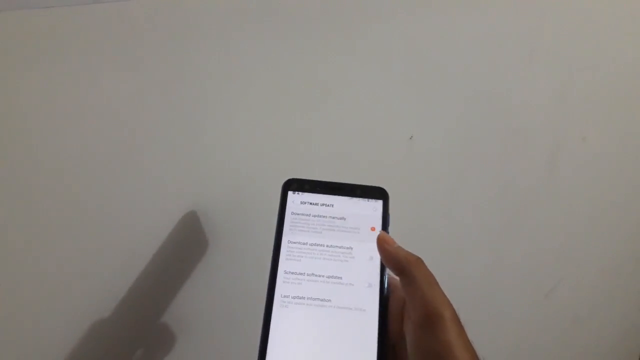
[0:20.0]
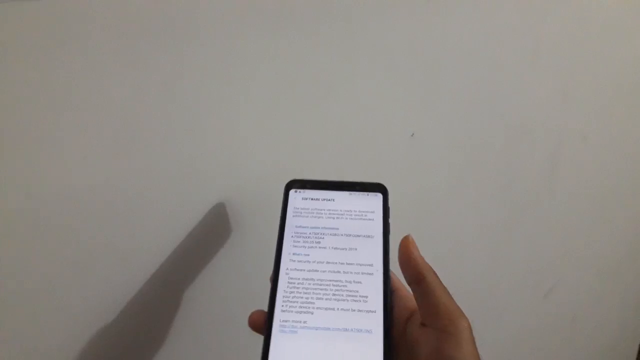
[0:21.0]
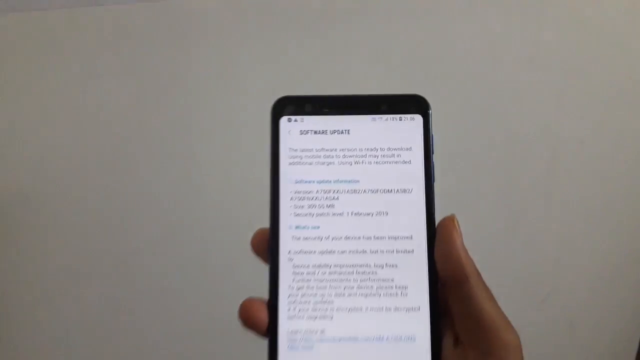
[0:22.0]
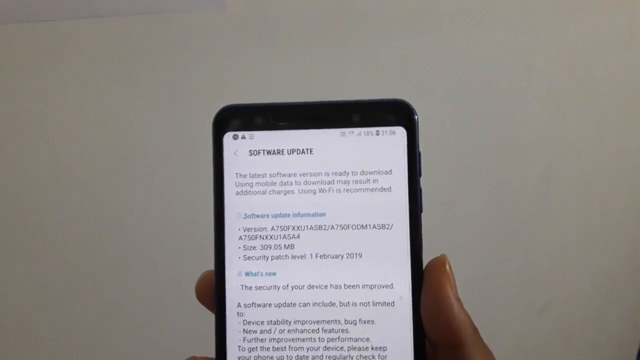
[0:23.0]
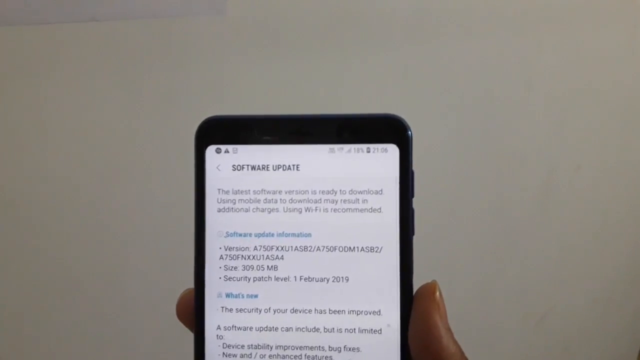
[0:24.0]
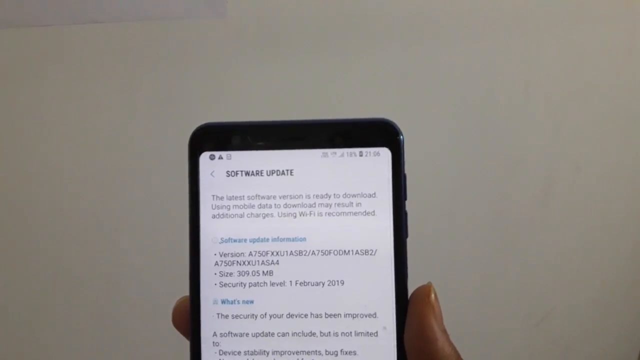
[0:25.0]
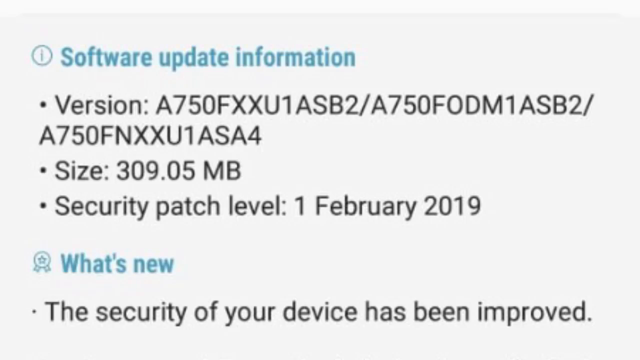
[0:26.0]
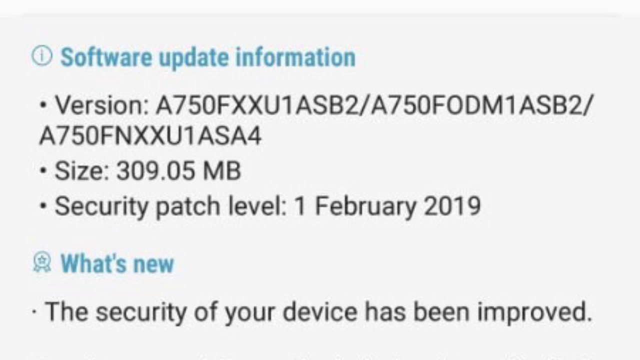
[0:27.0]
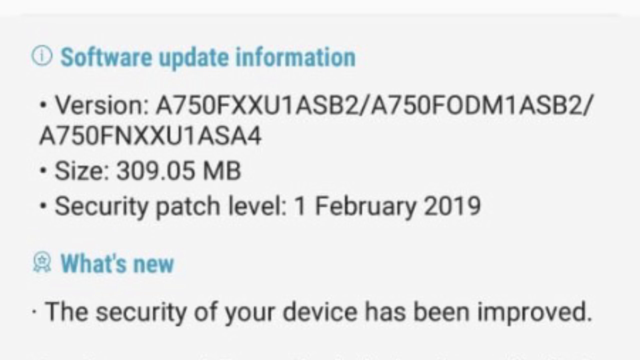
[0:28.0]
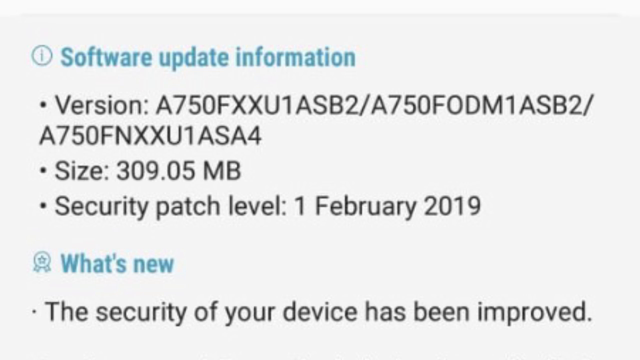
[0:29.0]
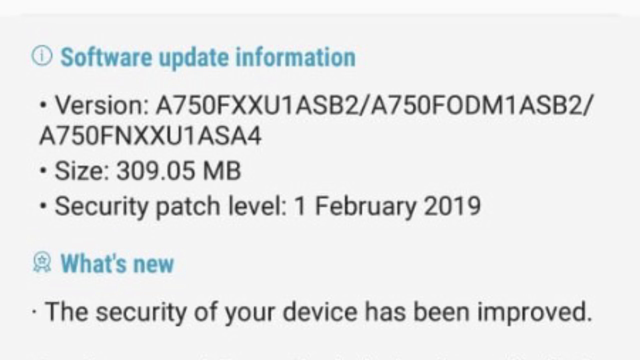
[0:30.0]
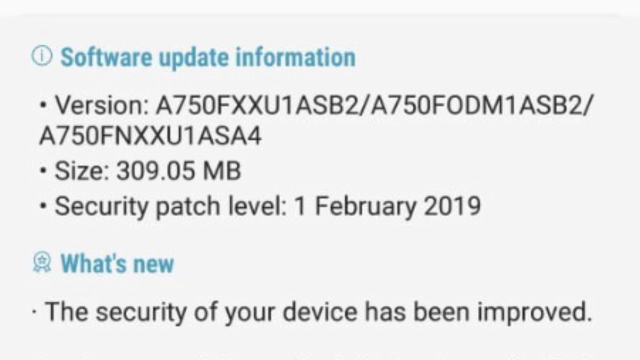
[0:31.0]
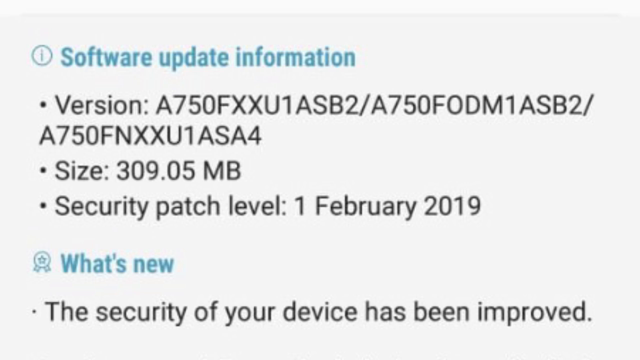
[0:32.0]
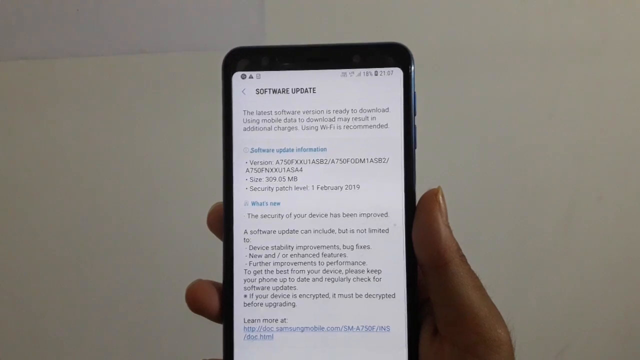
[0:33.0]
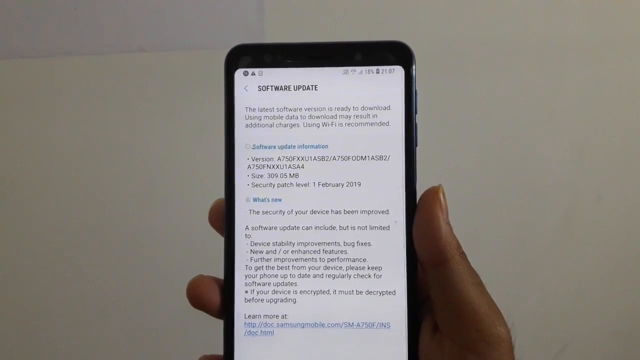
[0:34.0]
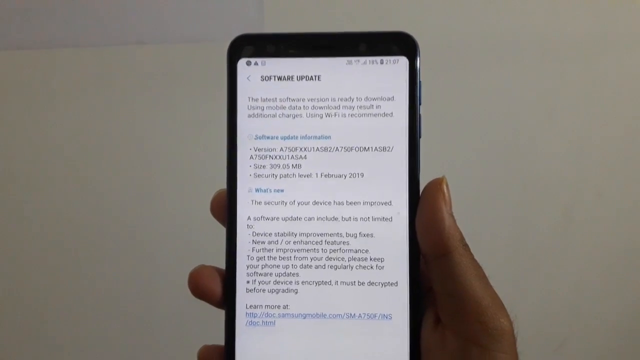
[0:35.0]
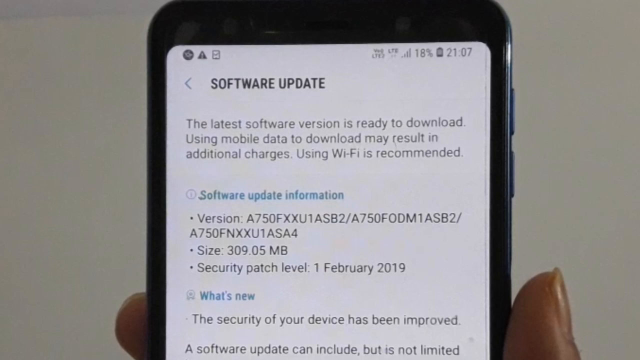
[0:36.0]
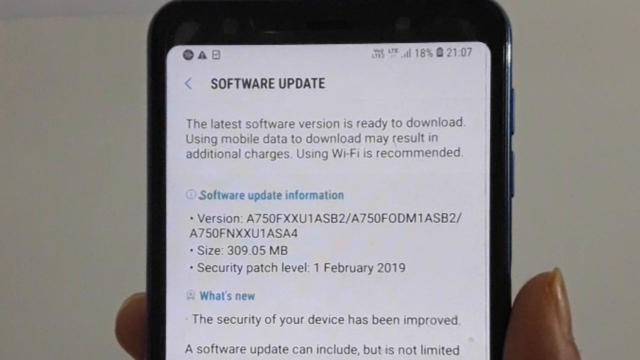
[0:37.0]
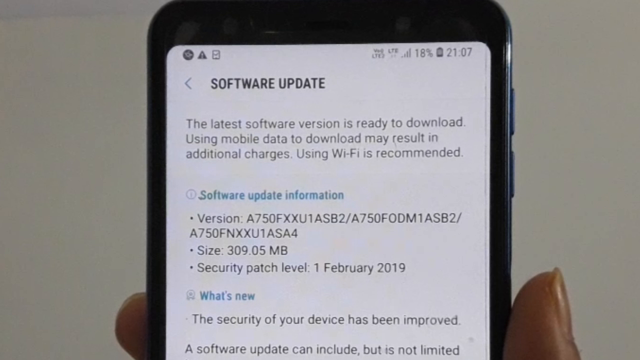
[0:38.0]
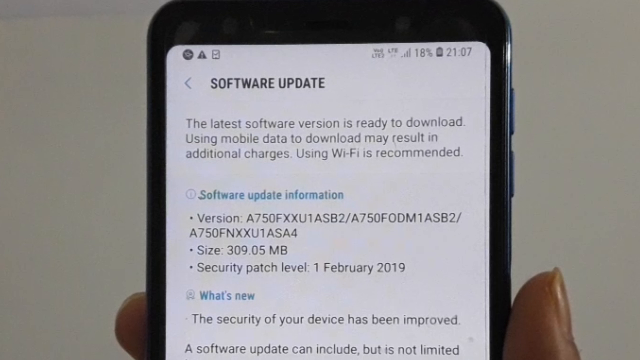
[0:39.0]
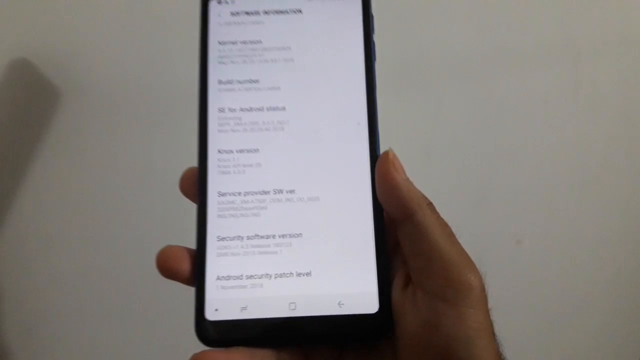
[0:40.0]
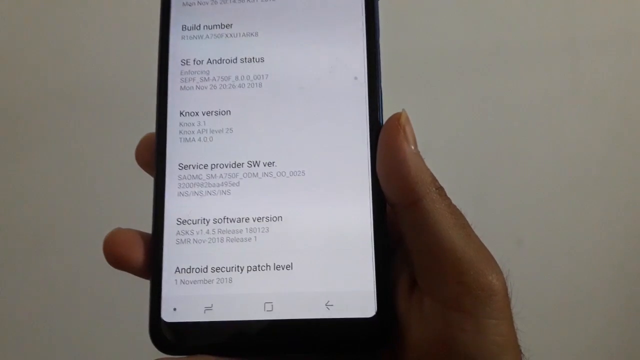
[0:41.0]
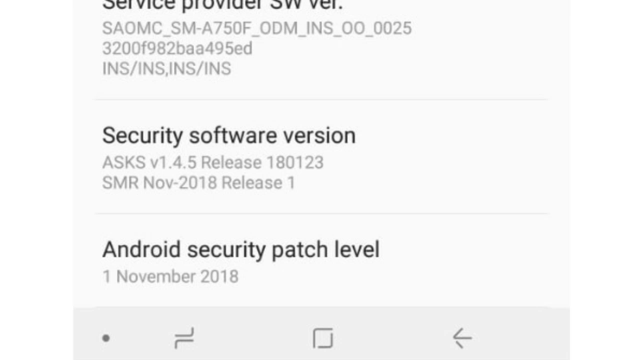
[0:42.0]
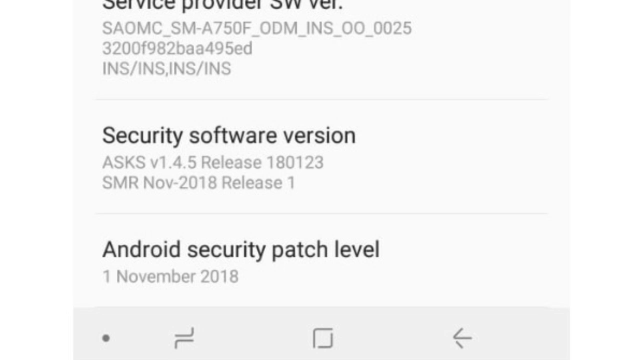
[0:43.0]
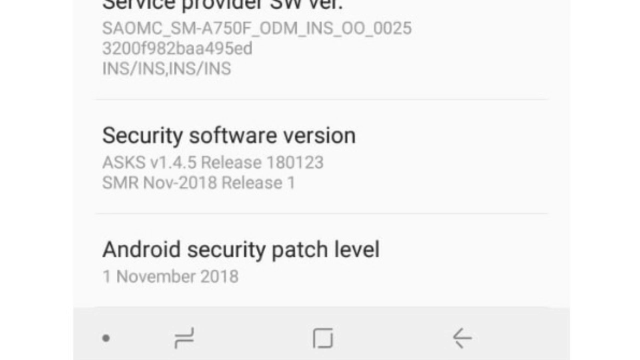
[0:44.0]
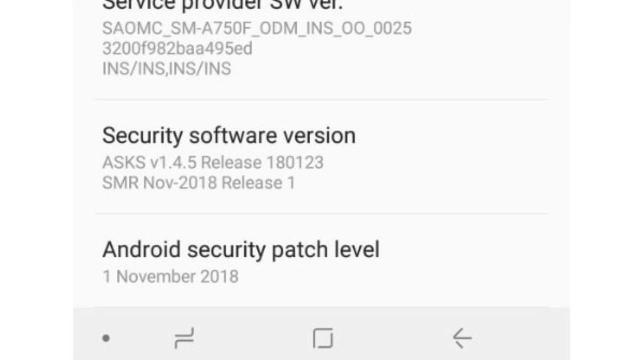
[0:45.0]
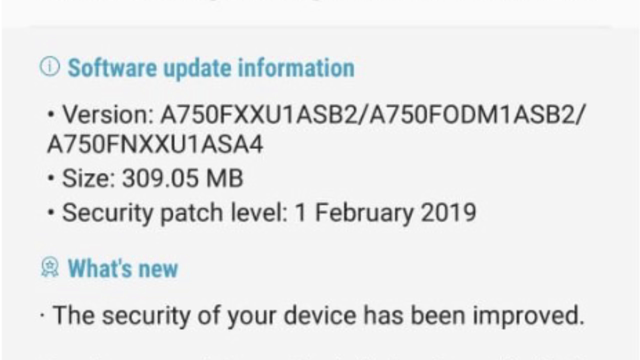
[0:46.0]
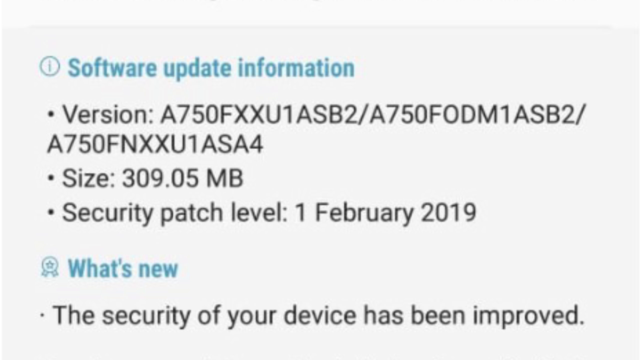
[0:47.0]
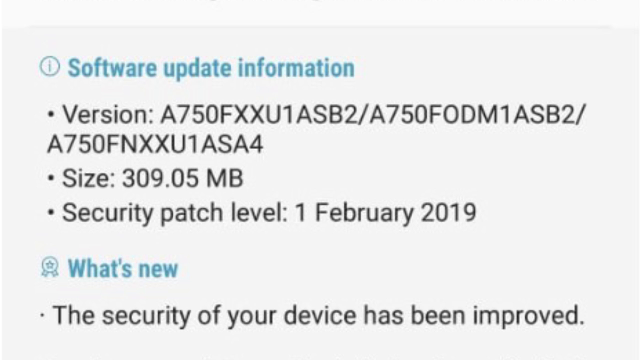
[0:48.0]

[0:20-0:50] A woman holds a Samsung phone, showing its face, which says "software update." A shadow falls on the wall, and her fingers are small and thin. Printed material from the company shows what the software update looks like. The woman then holds up the phone again, showing the security software version and the Android security information close up, and scrolls the page from top to bottom. The printed material appears on the screen again. She looks like she has darker skin, and her nails are nicely manicured, apparently with clear polish.